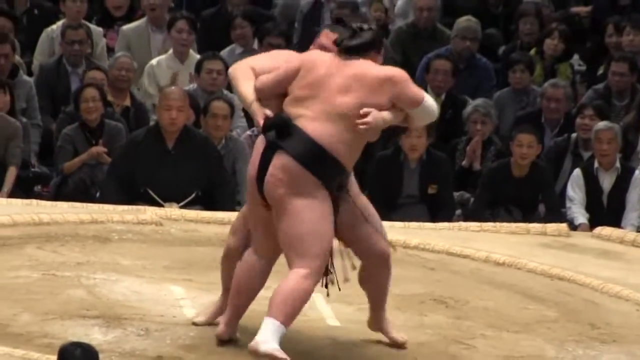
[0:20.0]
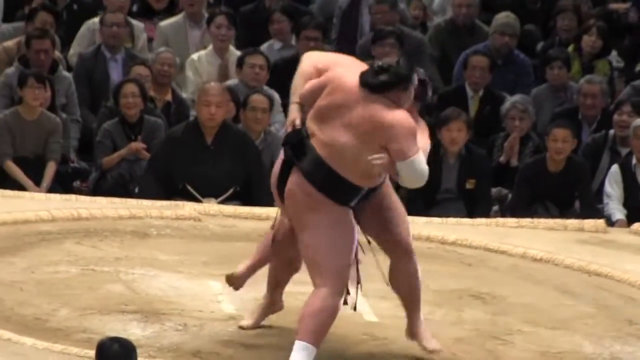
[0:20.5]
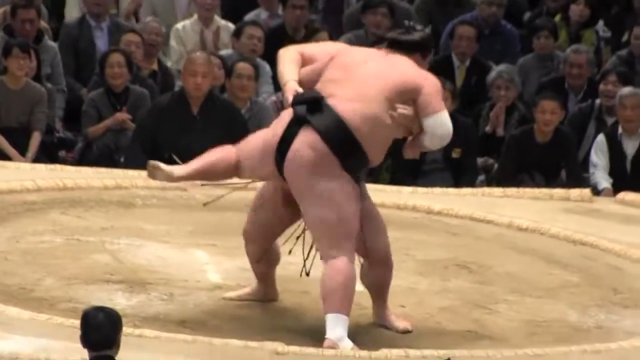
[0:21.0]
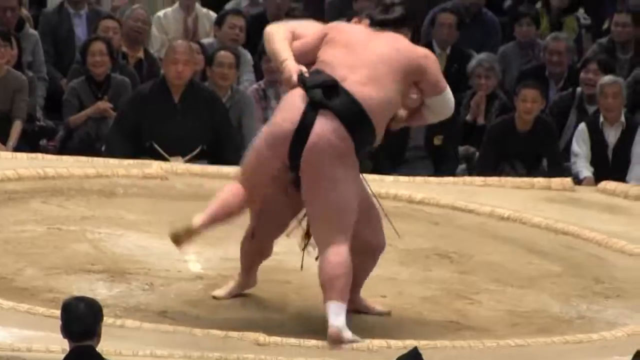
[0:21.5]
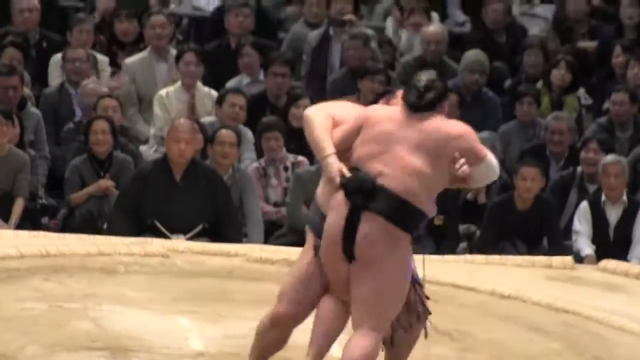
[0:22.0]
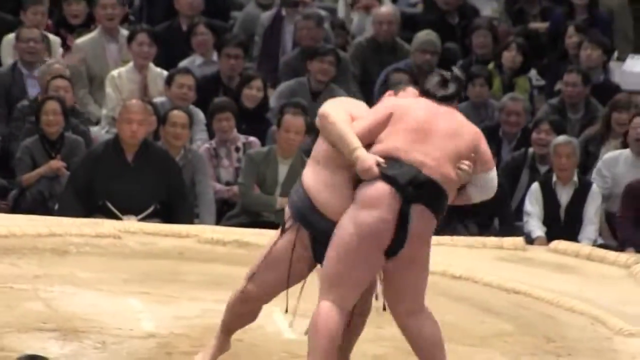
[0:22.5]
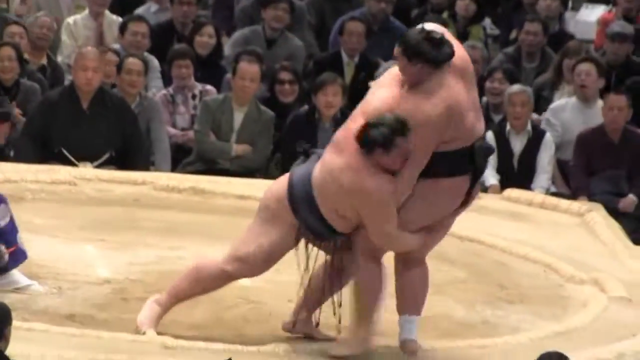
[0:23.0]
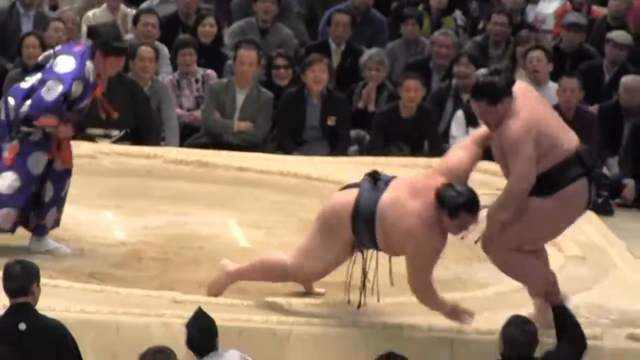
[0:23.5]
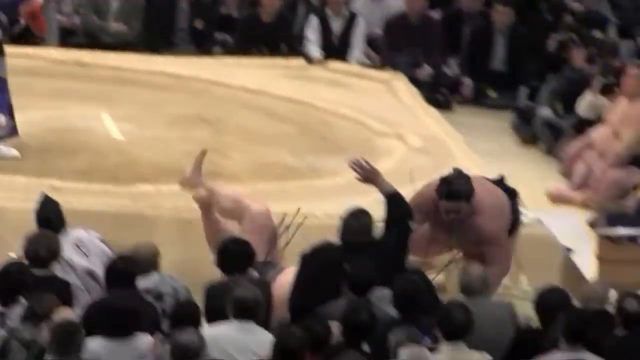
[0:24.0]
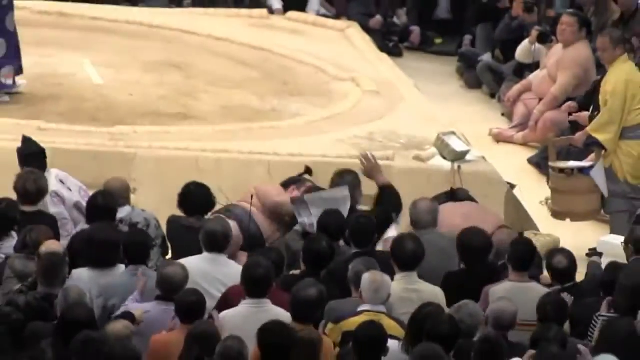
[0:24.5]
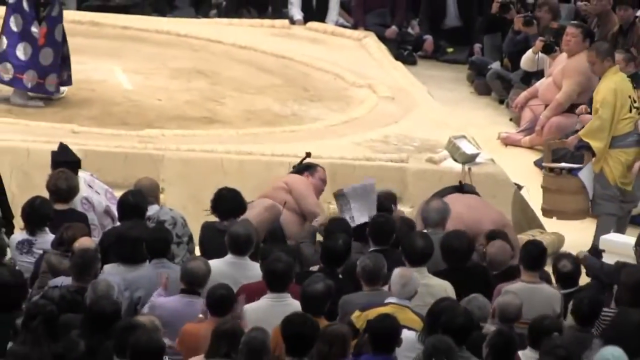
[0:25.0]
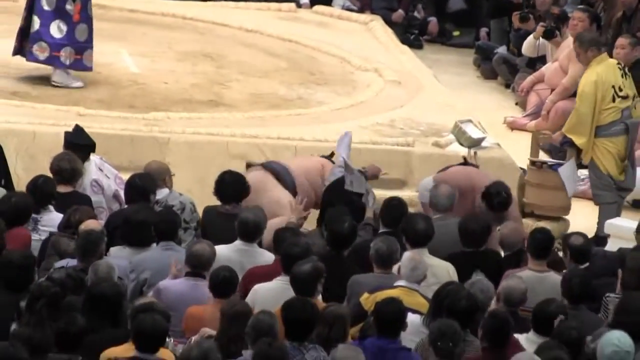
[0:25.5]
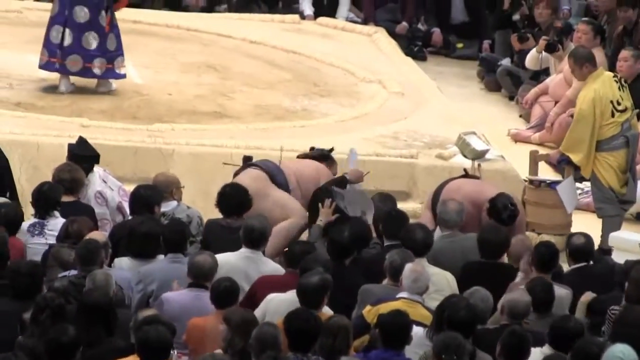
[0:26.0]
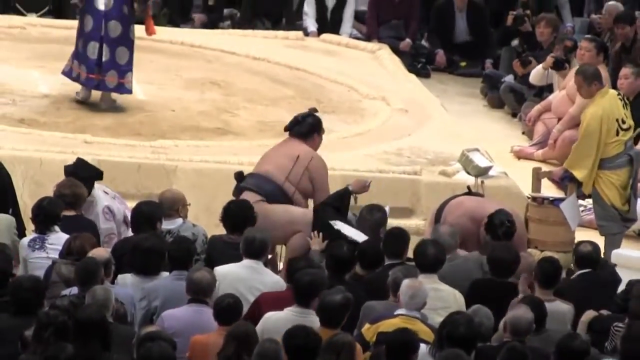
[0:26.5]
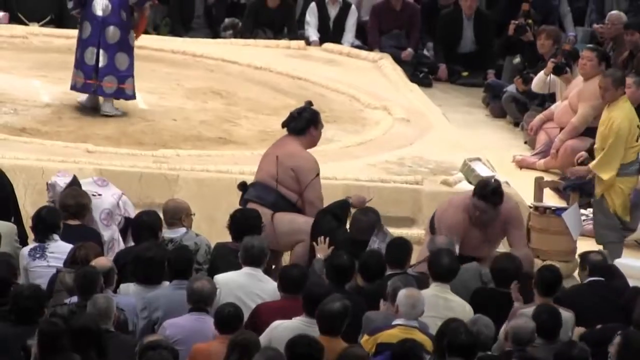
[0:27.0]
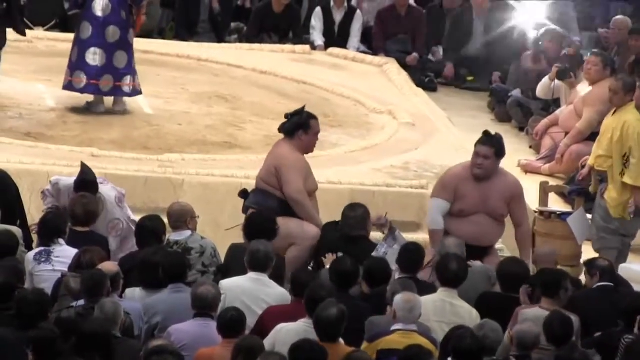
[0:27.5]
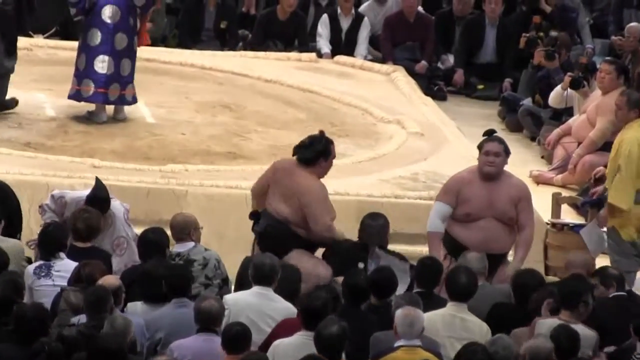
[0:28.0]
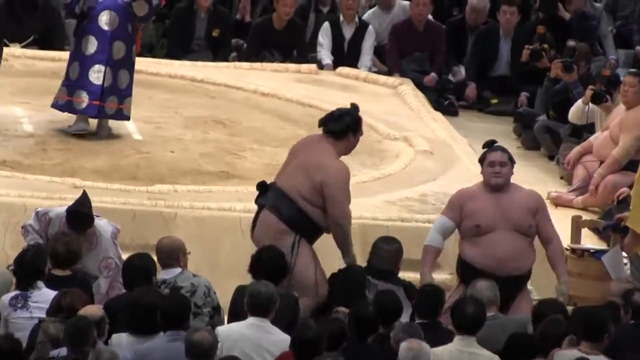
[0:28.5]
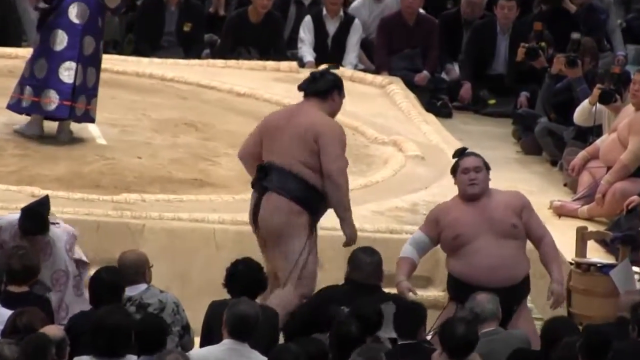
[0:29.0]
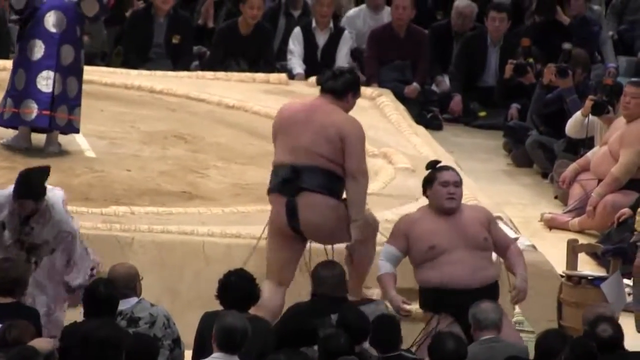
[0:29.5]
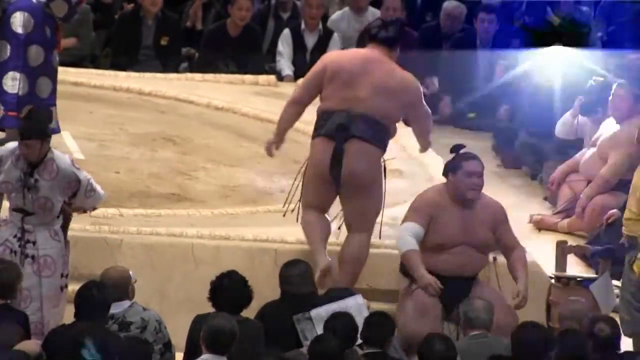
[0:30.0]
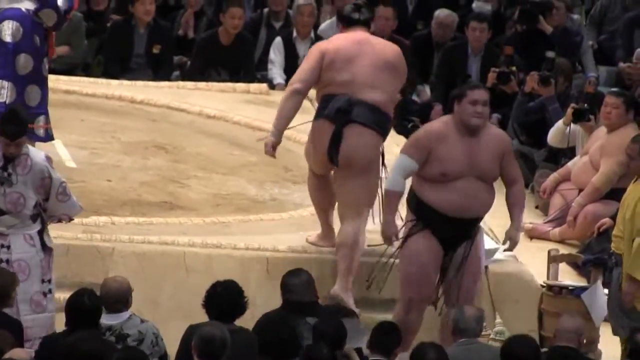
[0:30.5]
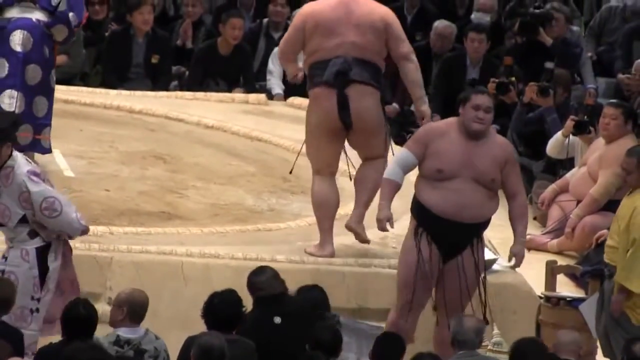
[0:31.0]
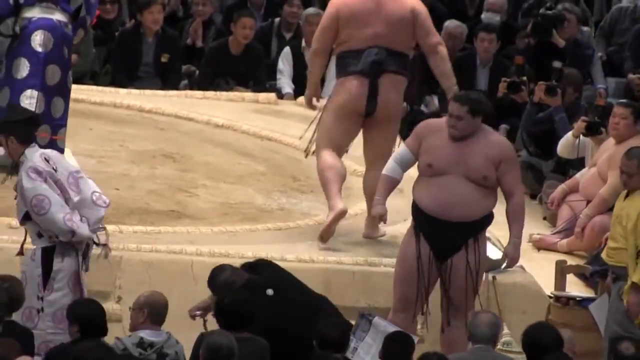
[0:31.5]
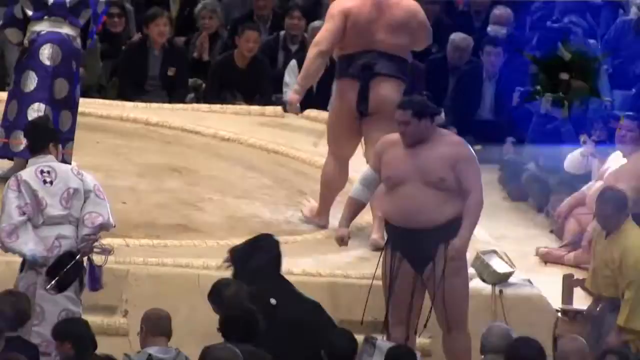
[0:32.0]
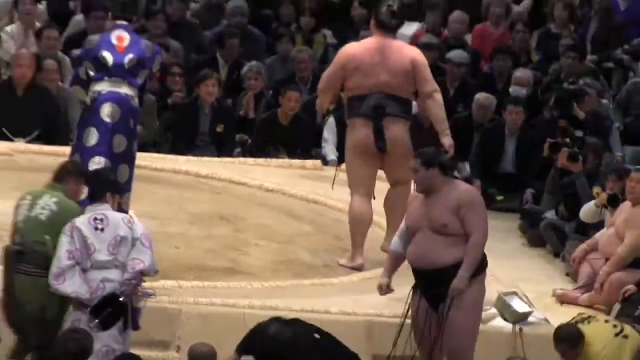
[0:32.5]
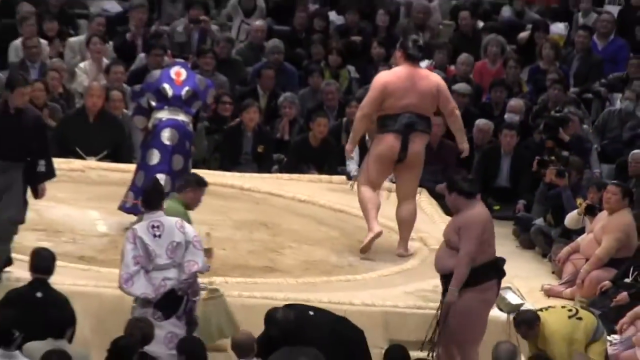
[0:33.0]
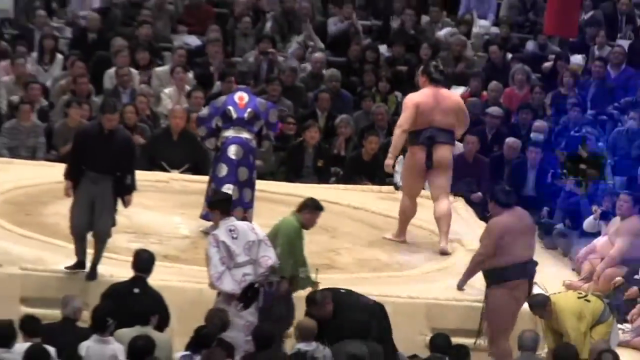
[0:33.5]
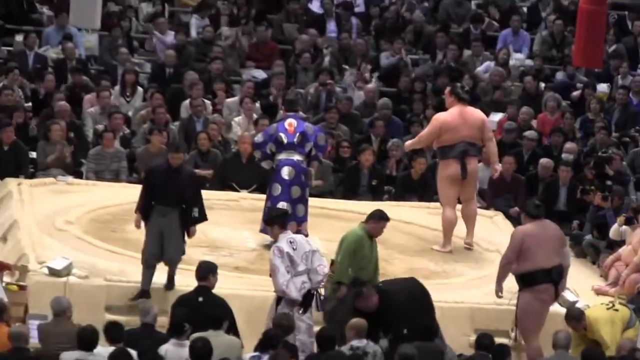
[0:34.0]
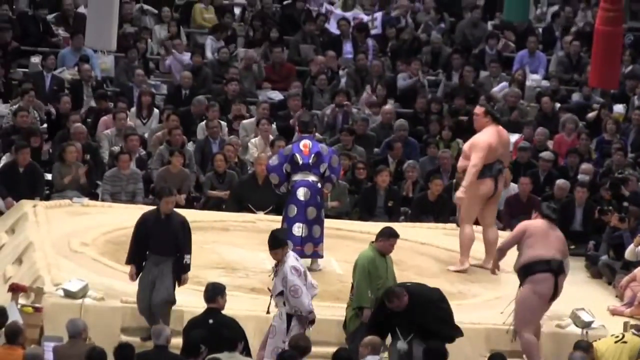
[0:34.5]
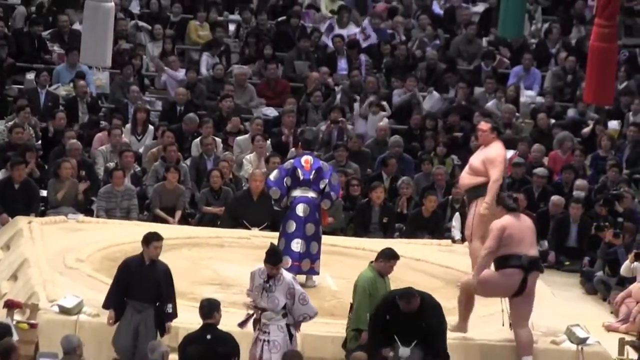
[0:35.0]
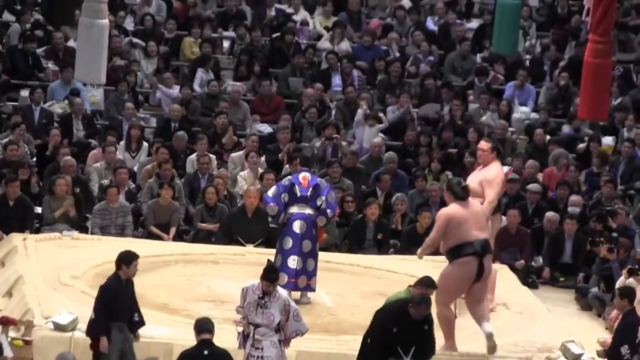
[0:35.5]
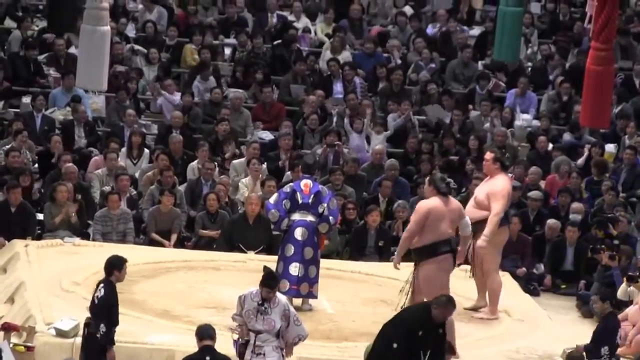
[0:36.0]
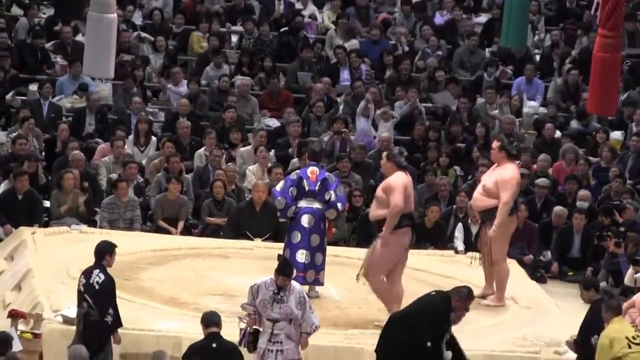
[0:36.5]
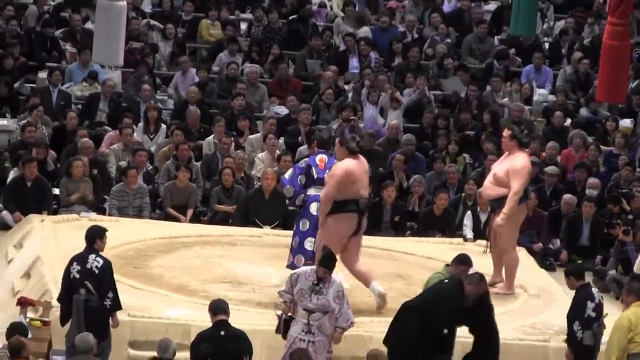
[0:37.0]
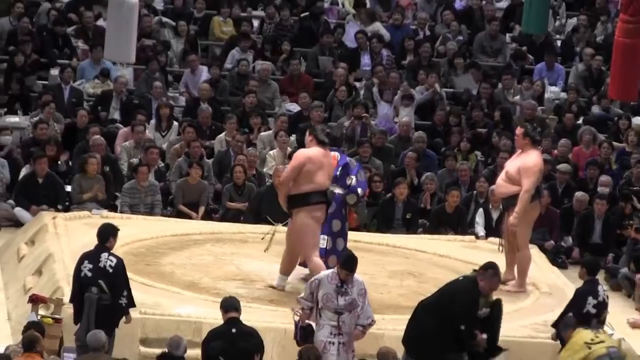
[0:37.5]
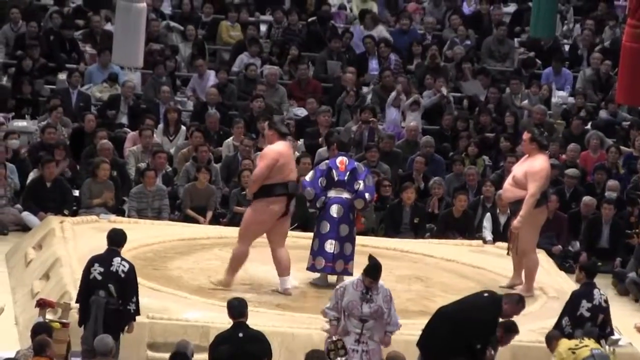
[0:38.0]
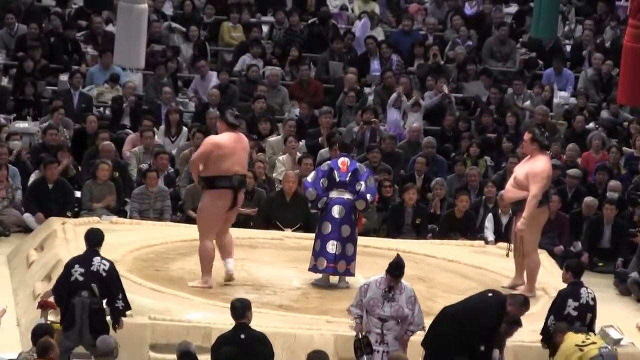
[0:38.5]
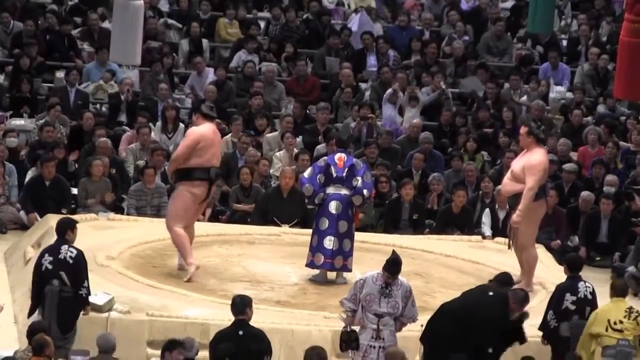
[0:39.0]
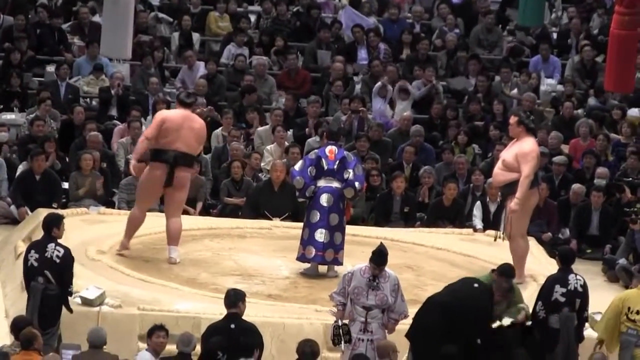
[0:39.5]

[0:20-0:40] Two sumo wrestlers are in the middle of a fight, standing on top of dirt that has a circular shape with small white lines in the center. One wrestler manages to knock the other off the dirt mound, and then he ends up falling over at around the same time. Both wear very thick, sturdy black belts around their waists and have their black hair back in man buns; their hair looks like it would be very long if taken down. After both land on the ground, they get back up and return to the dirt mound where they started. A referee in a fancy blue and silver outfit with white shoes paces back and forth in the center.